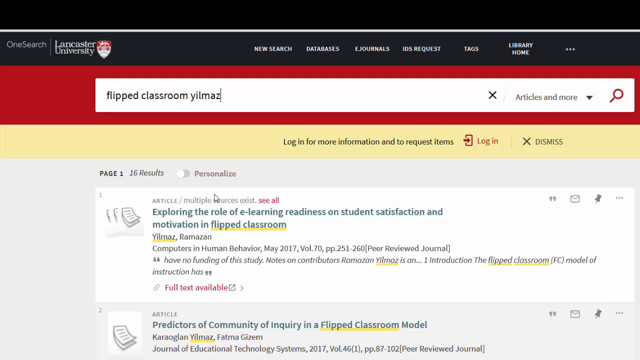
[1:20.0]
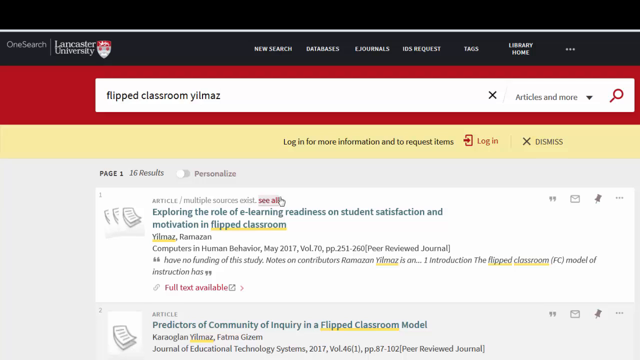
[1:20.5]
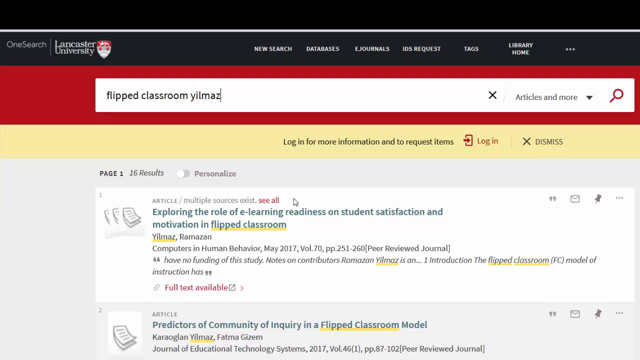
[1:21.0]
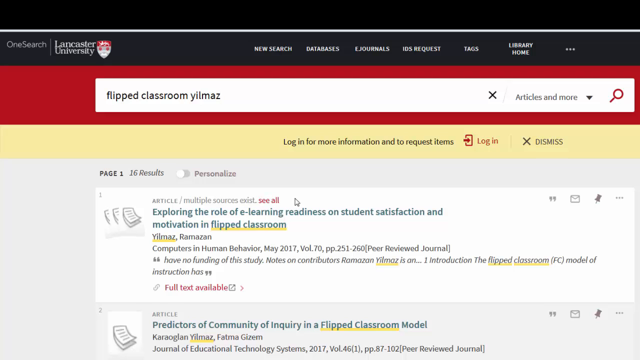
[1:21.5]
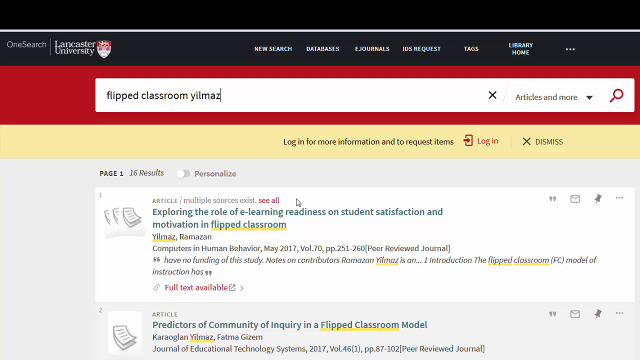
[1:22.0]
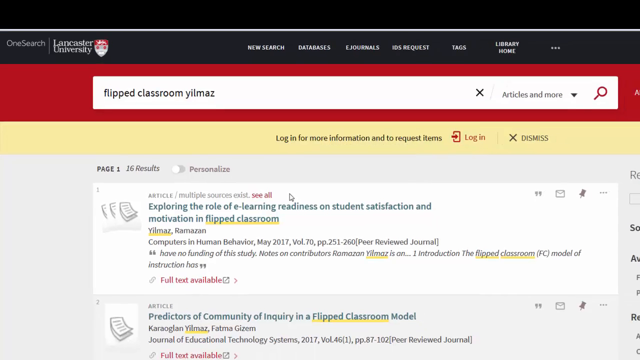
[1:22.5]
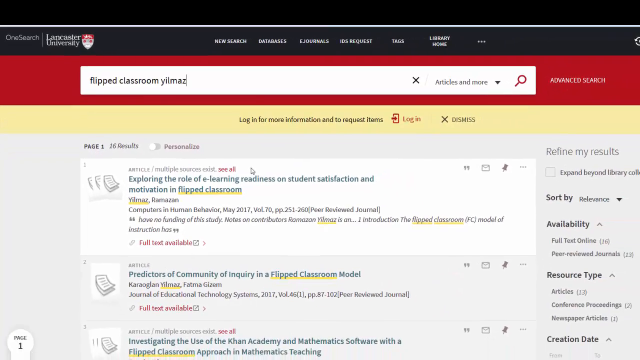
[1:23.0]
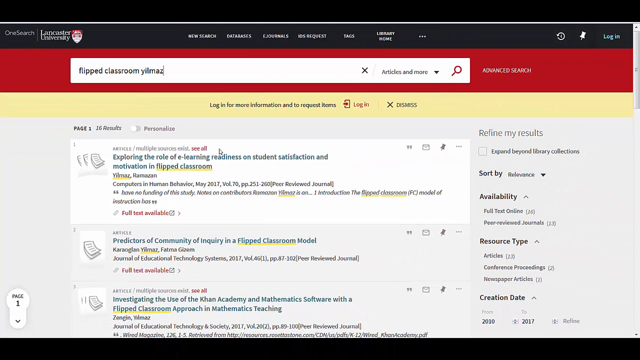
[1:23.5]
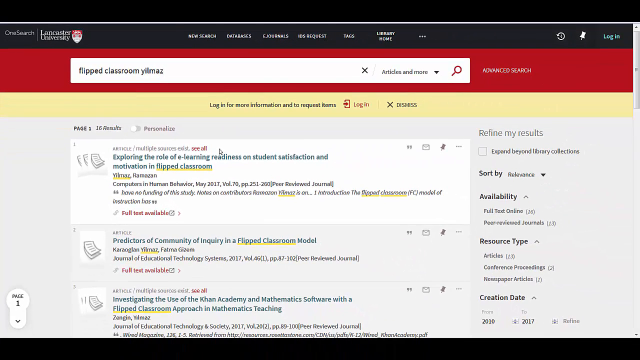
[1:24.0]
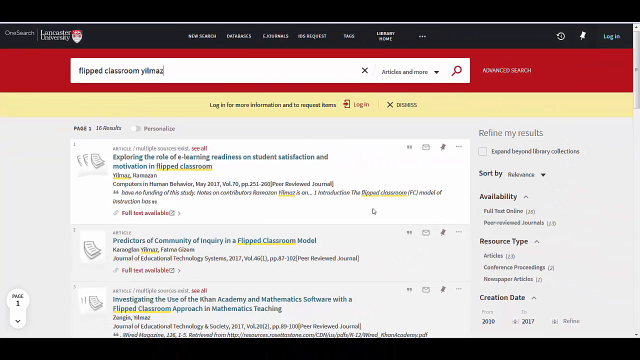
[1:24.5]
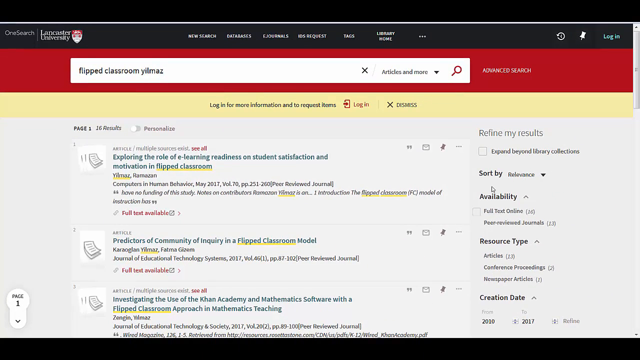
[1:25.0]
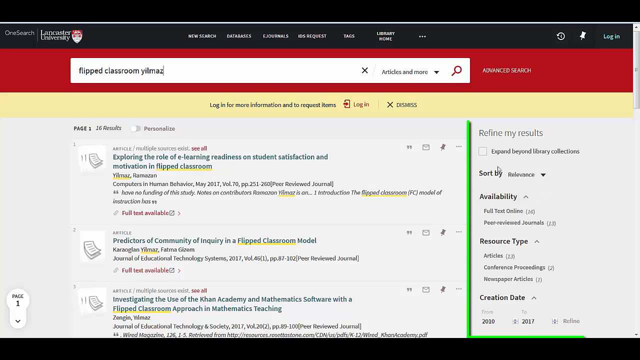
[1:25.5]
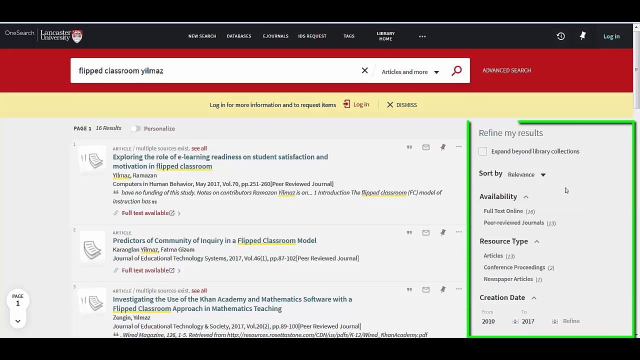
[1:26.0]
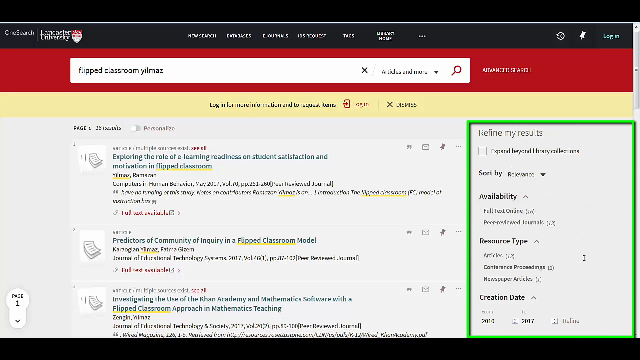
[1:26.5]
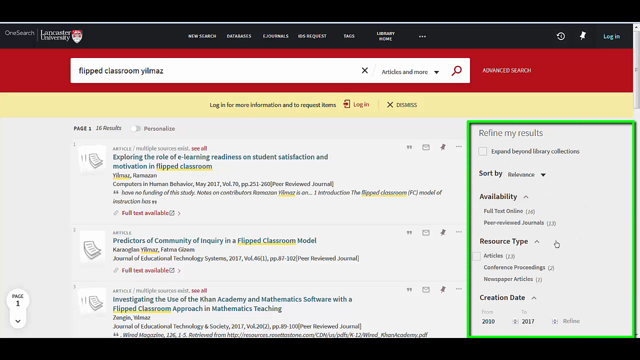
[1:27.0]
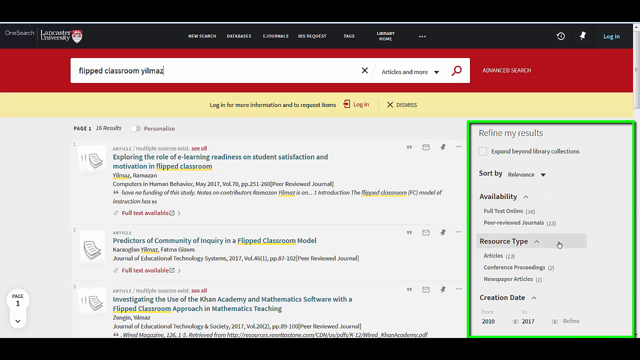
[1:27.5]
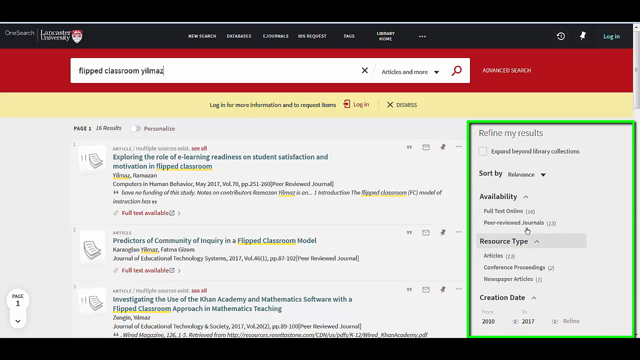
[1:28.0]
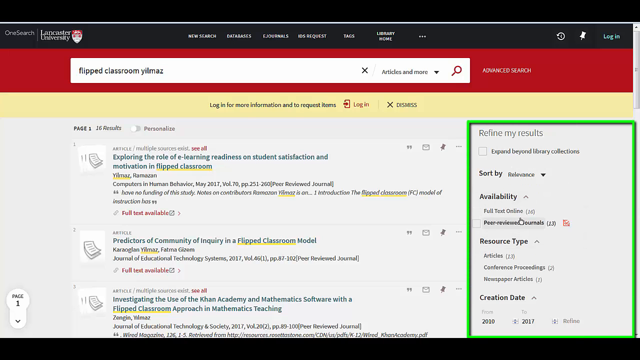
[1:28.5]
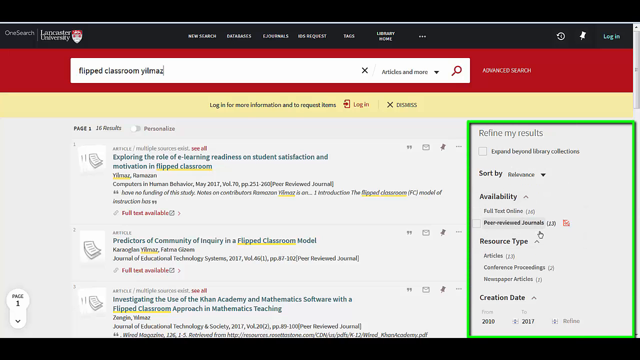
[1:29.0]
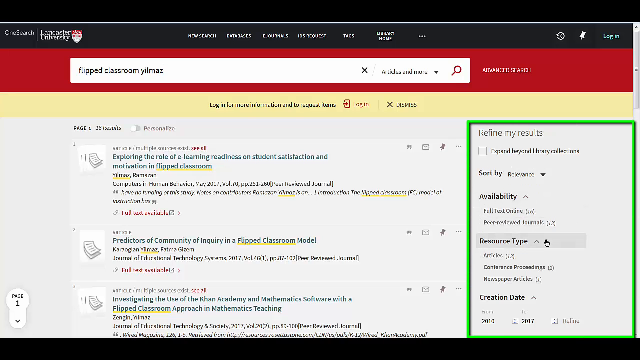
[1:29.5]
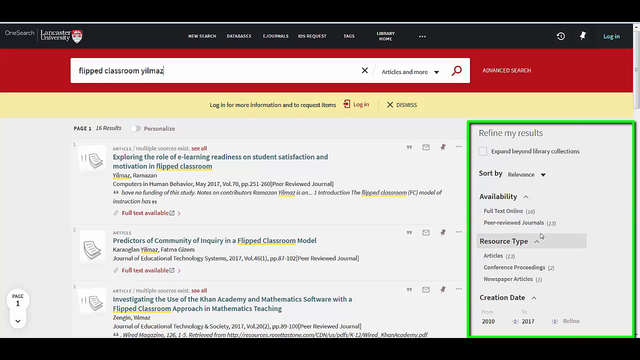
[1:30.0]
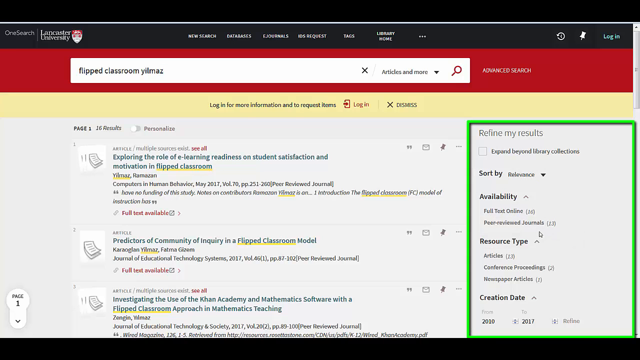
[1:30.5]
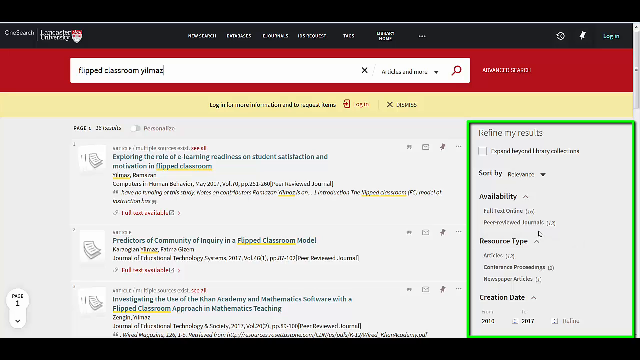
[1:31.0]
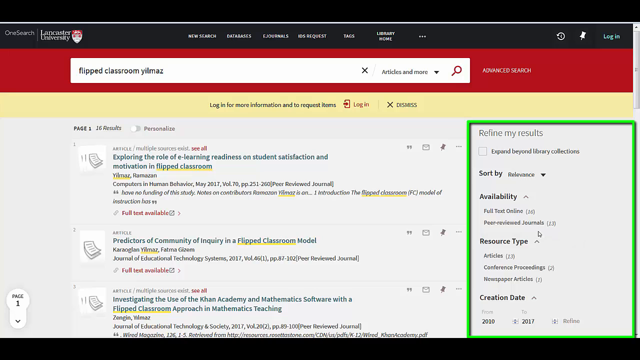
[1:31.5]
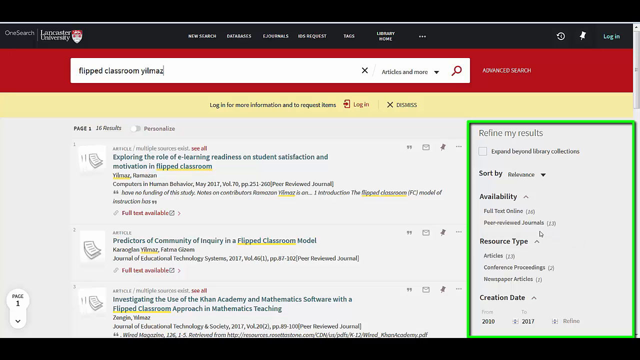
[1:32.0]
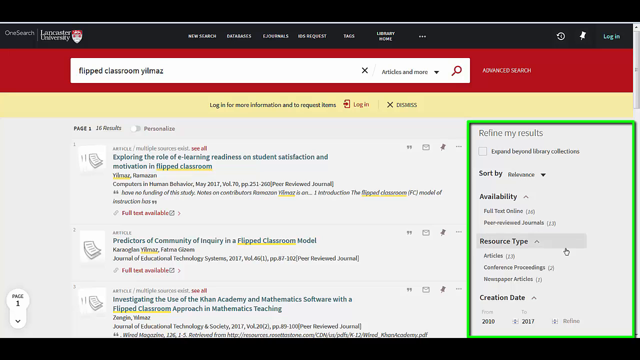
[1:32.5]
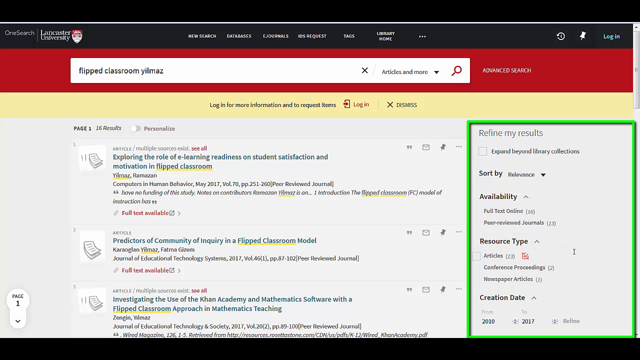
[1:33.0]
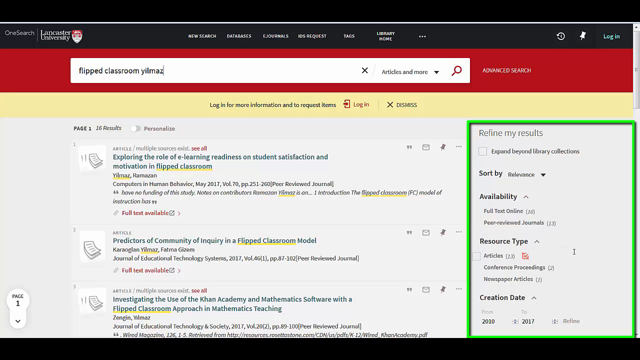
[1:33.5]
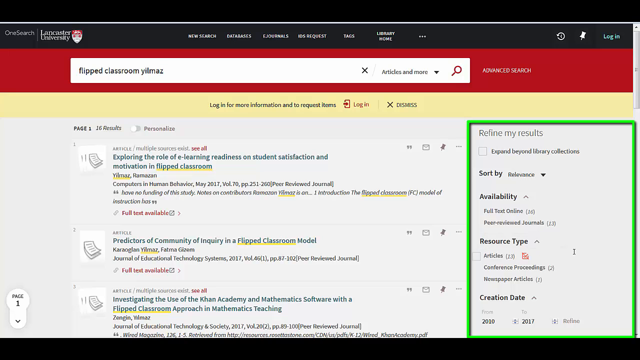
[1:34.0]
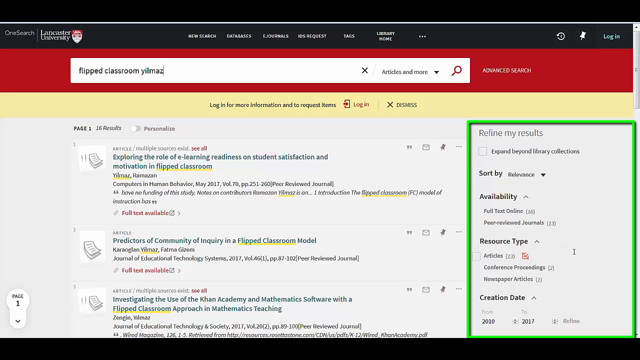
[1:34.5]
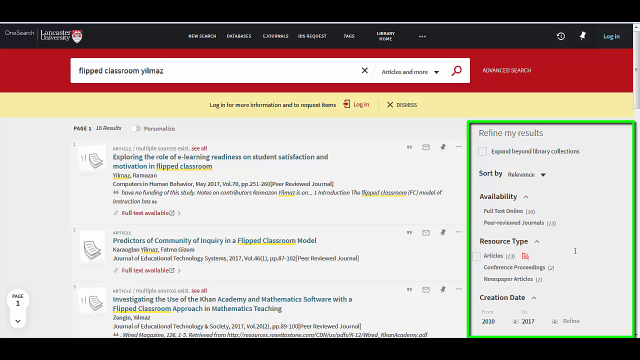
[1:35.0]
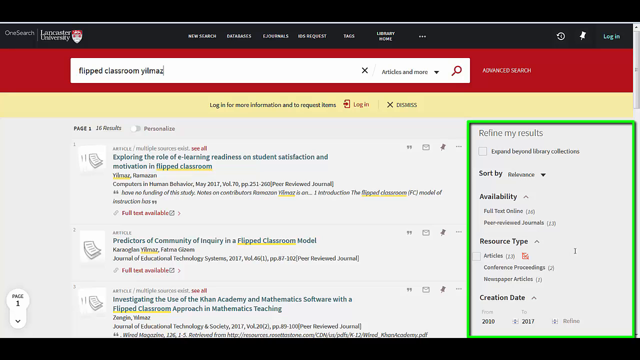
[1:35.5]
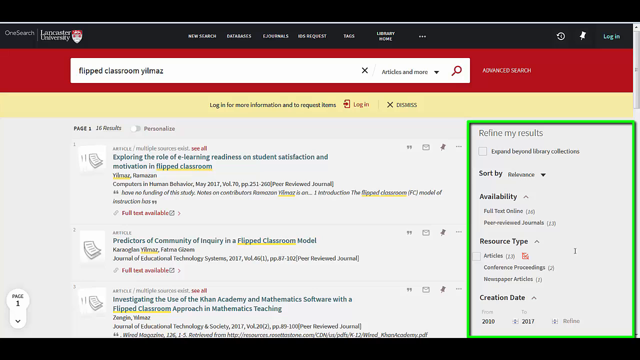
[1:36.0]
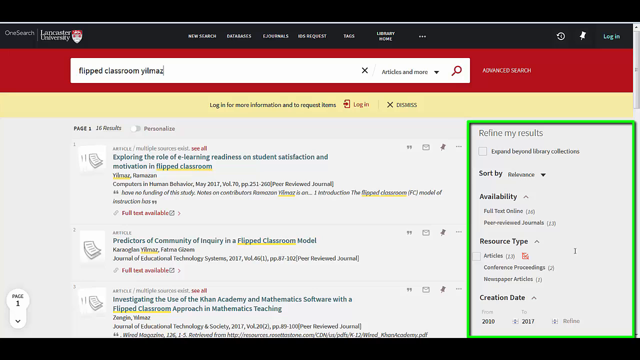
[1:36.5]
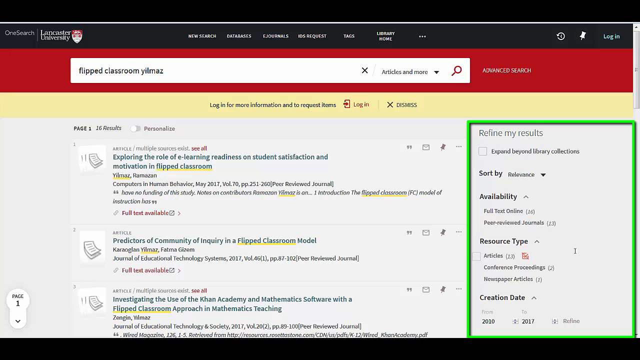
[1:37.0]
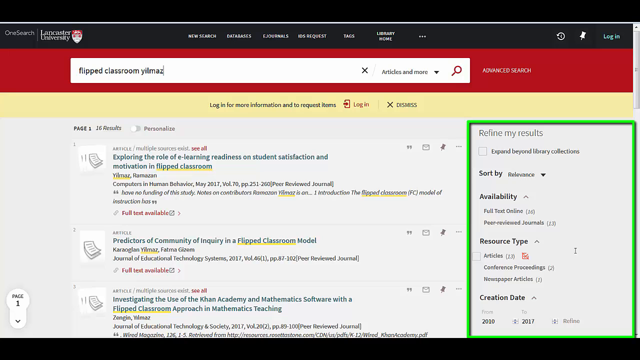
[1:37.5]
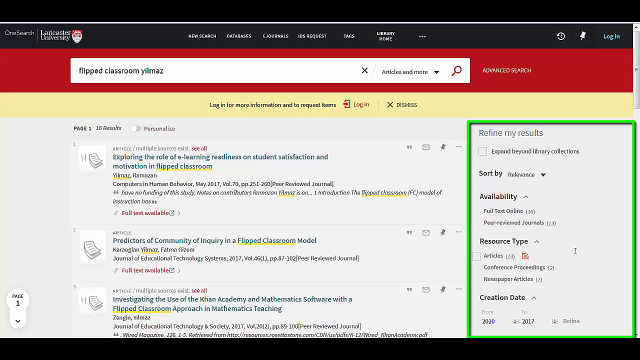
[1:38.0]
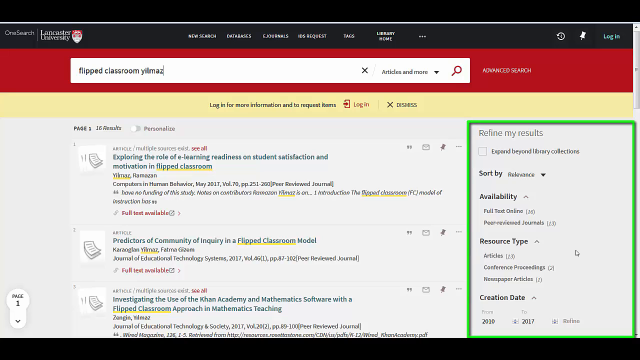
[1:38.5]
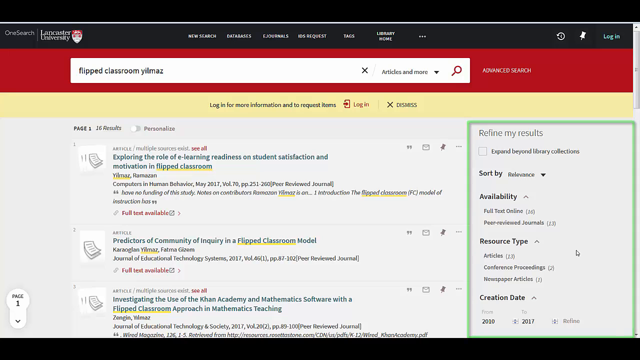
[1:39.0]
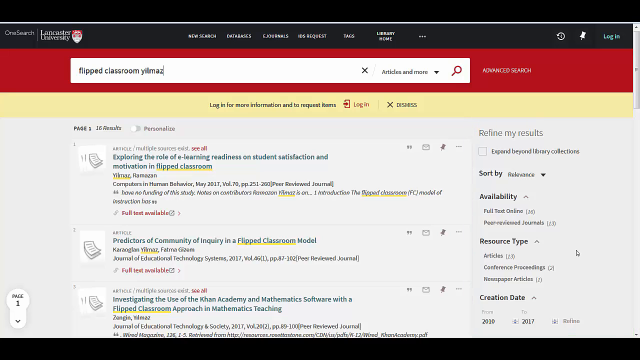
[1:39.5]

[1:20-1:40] The front page of a website, apparently Lancaster University's, has a large white search bar at the top of the screen containing the words "flipped classroom Yilmaz". It appears someone has entered this into the search bar, perhaps to demonstrate how to search. Different articles then appear. On the right side of the screen is a section labelled "refine my results", with options to sort by availability, resource type and creation date. The "refine my results" section is highlighted in green, apparently indicating that the person is using it. It looks as though somebody is demonstrating how to use the website's search system. The video then goes to a particular article called "Exploring the role of eLearning readiness on student satisfaction and motivation in flipped classroom", one of the results the system has pulled up.